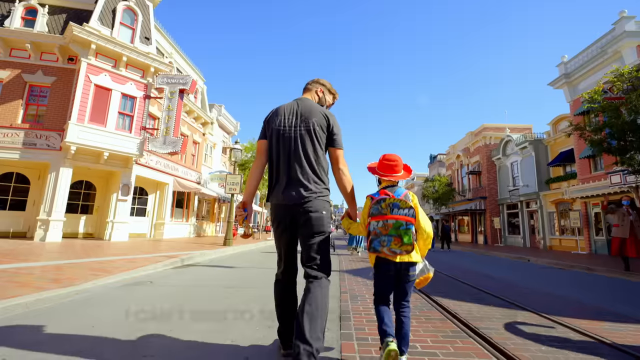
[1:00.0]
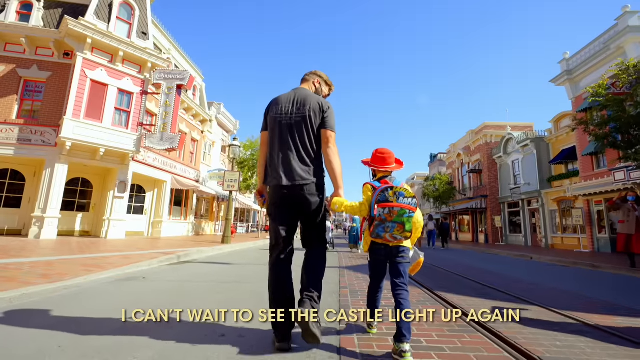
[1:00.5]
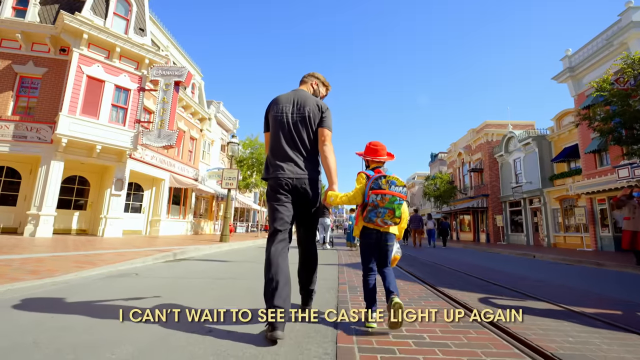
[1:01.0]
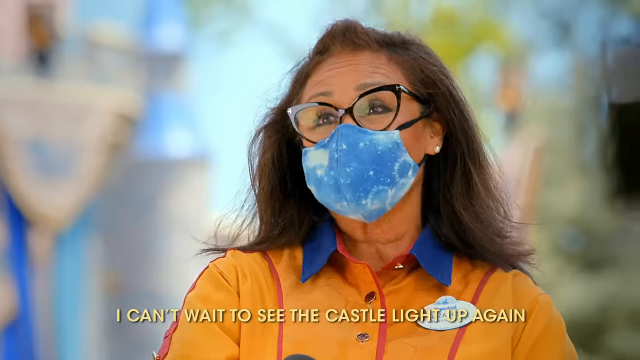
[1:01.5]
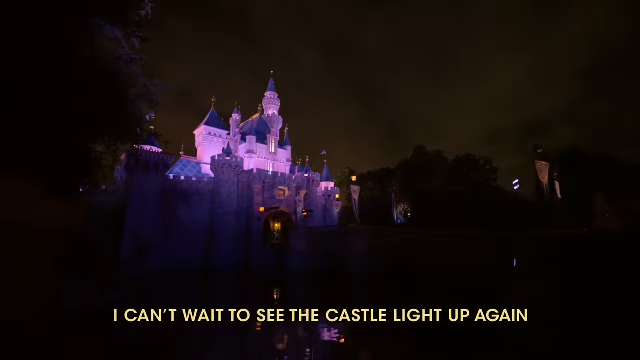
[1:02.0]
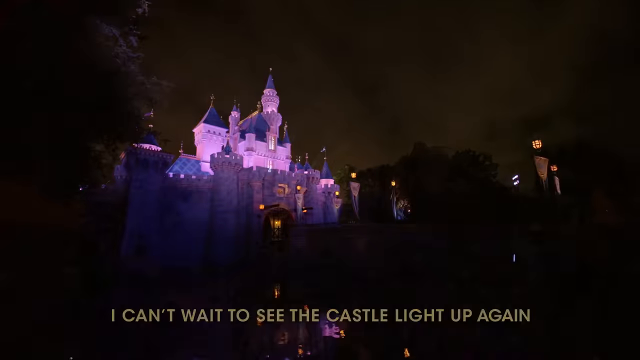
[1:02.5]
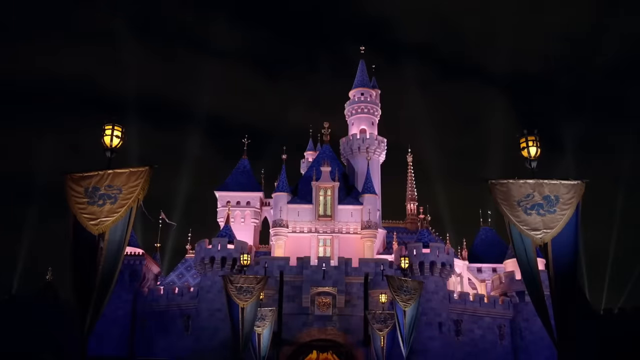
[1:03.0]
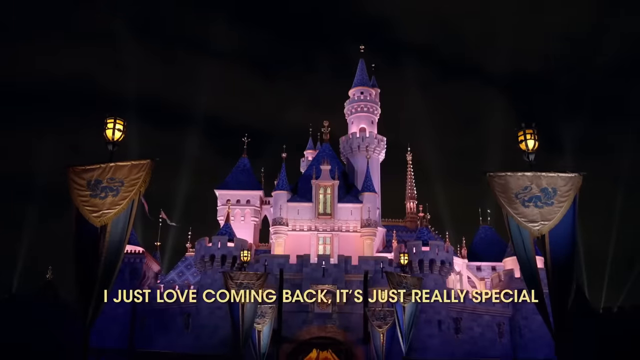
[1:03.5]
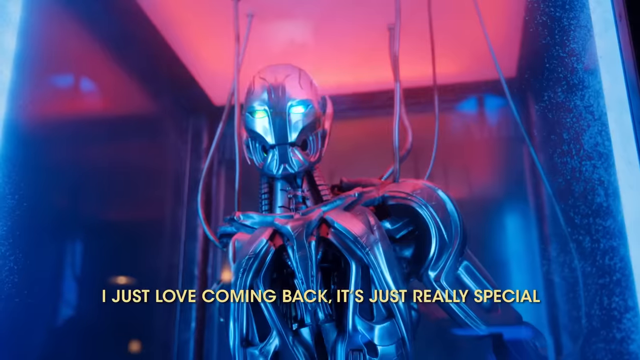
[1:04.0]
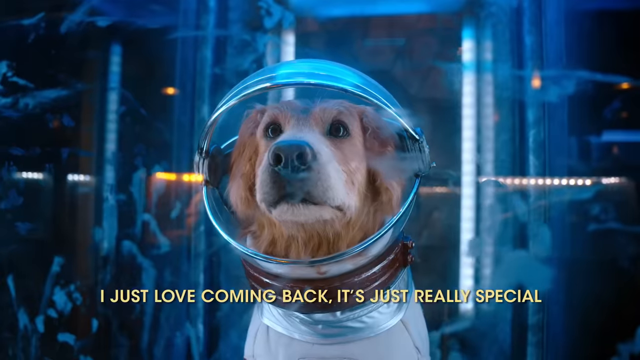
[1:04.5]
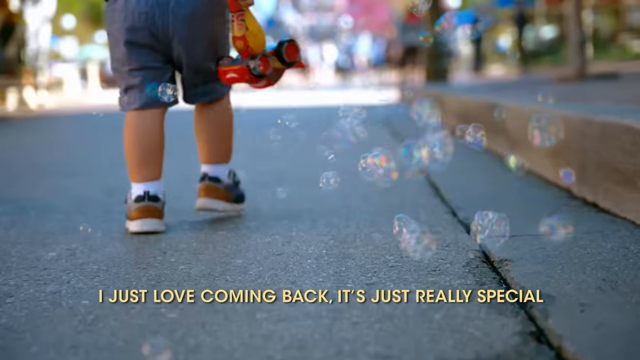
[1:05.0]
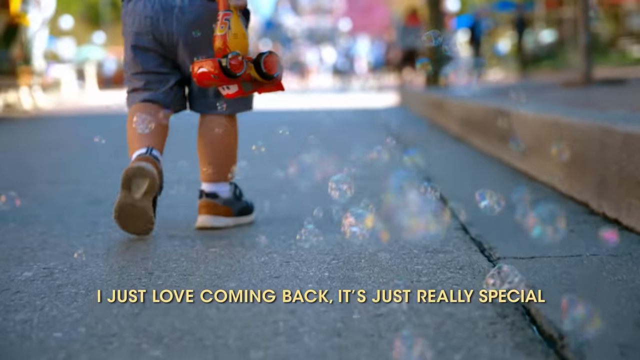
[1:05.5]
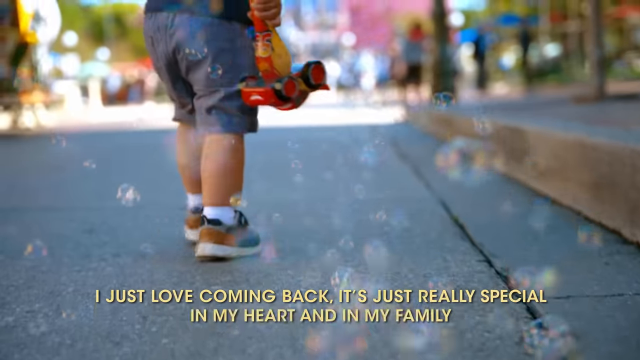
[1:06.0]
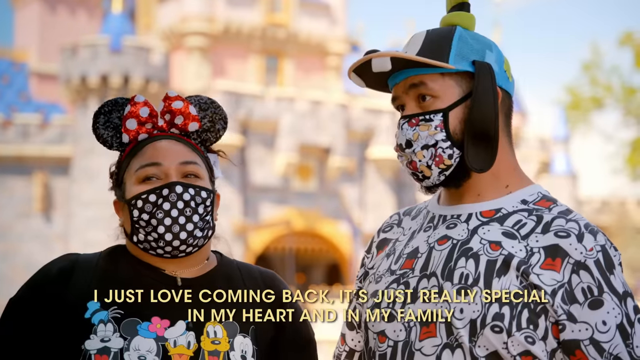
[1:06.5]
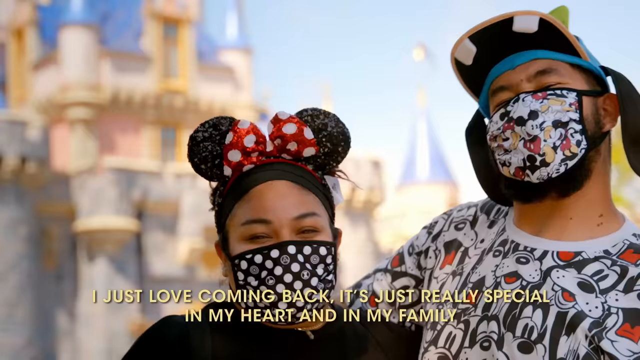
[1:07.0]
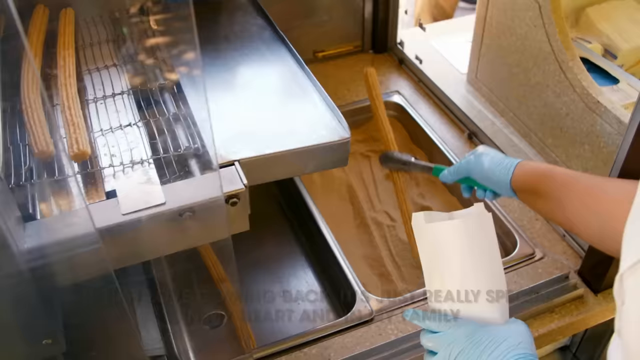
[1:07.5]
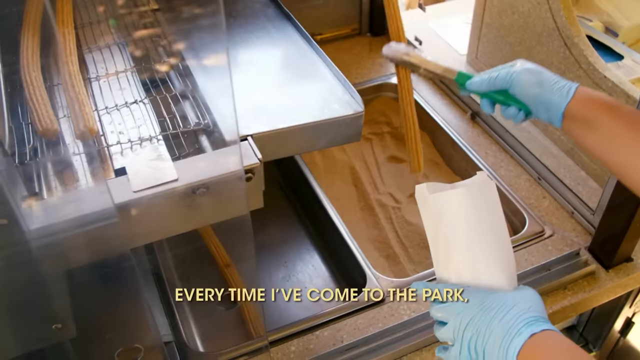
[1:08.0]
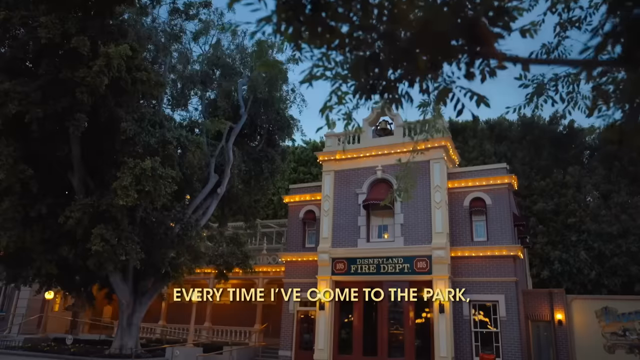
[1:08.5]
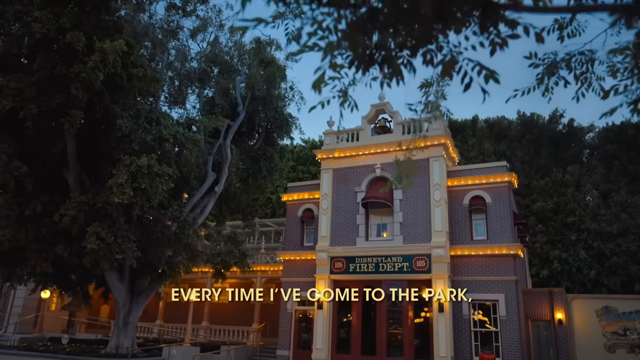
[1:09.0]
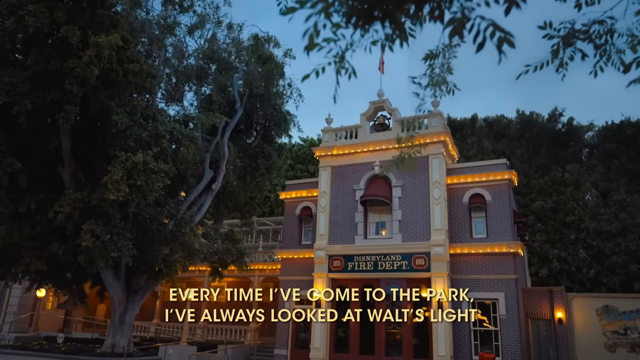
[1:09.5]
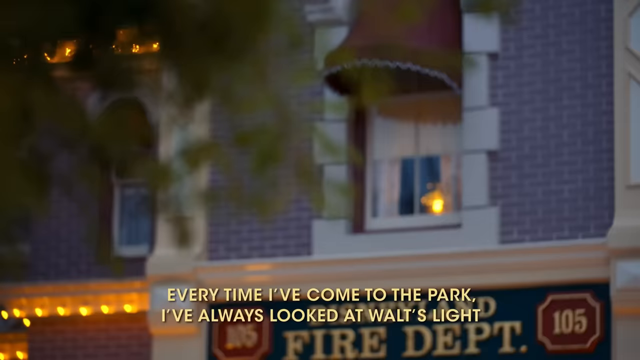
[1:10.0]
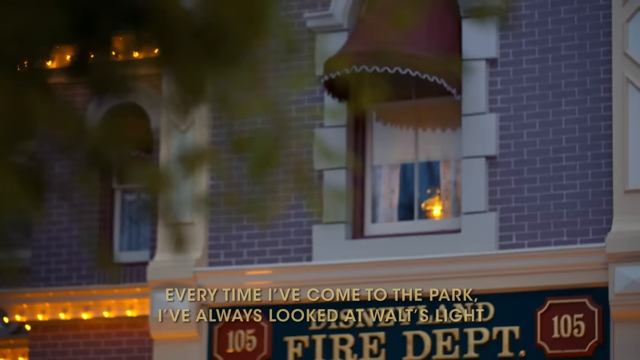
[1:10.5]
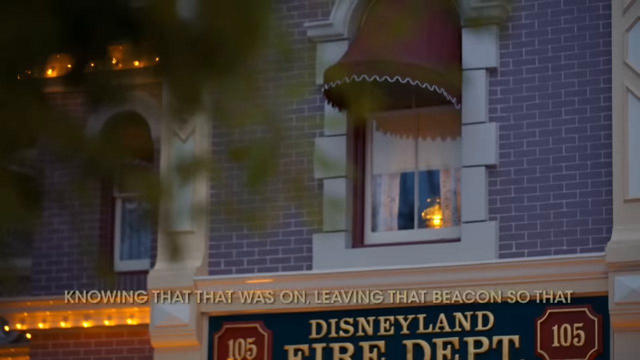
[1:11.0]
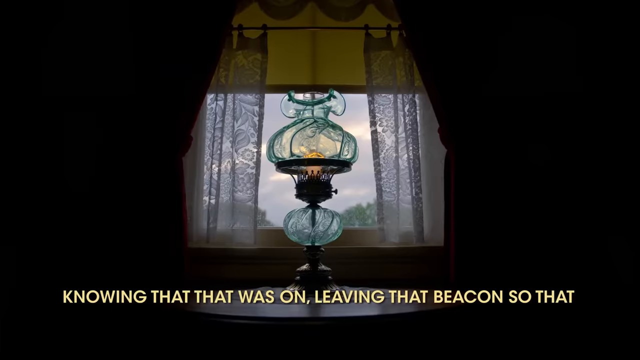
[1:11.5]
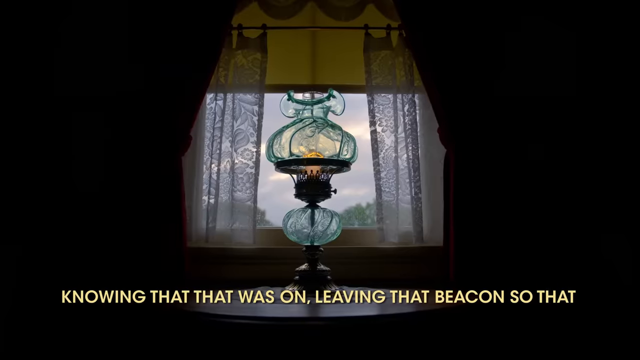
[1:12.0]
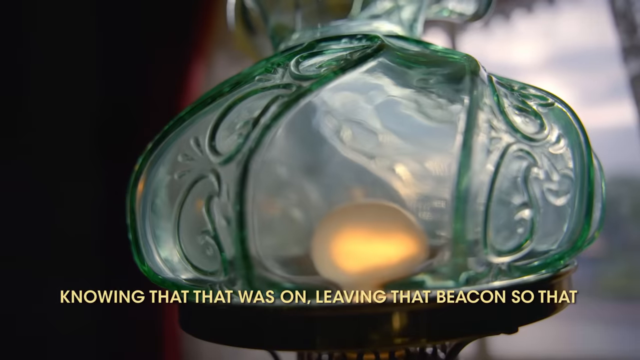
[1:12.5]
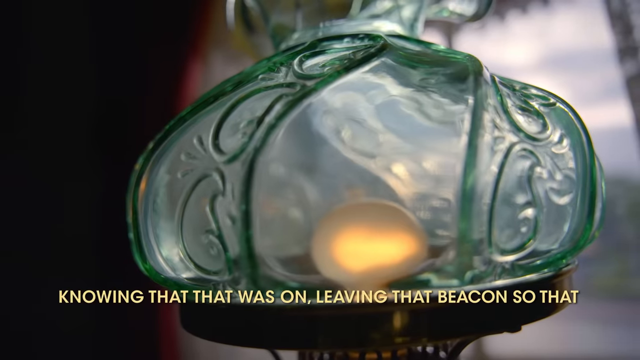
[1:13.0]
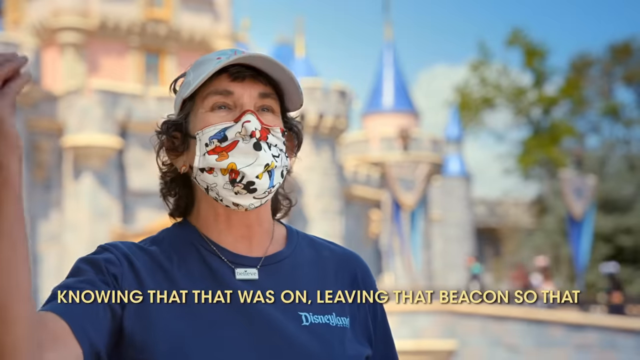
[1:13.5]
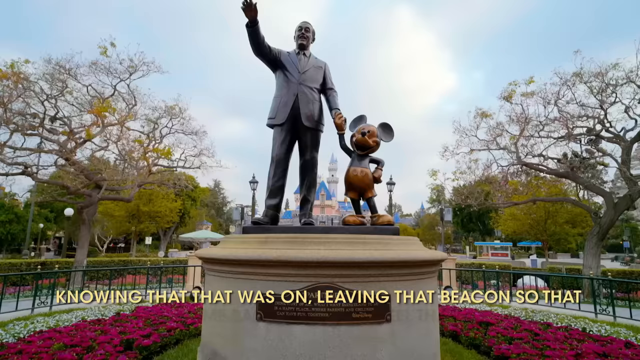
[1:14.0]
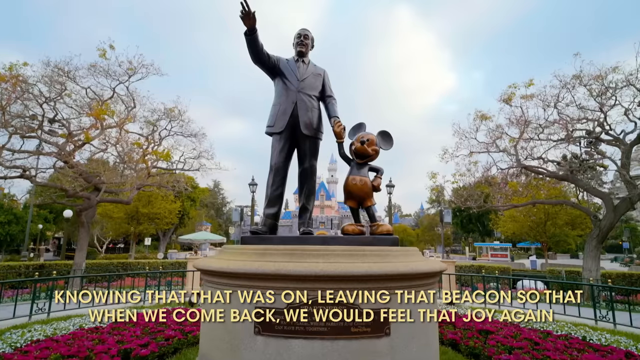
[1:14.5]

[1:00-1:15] The setting changes to what looks like evening, with a different, perhaps slower style. A dad and his son walk alone down a park path; the park is perhaps closing, they look like they have had a long day, and he is holding various gear. A worker wearing a mask, a yellow shirt and a badge has a quick conversation, possibly about the castle lights. The big signature castle then appears lit up in purple lighting. A little robot appears, and a dog in a little astronaut uniform. The video goes back to daytime: two people who look like a couple, about in their 30s, wear masks and are interviewed, smiling as they eat churros that have just been prepared for them. Text reads "Disneyland Fire Department," and a kerosene lamp is visible.